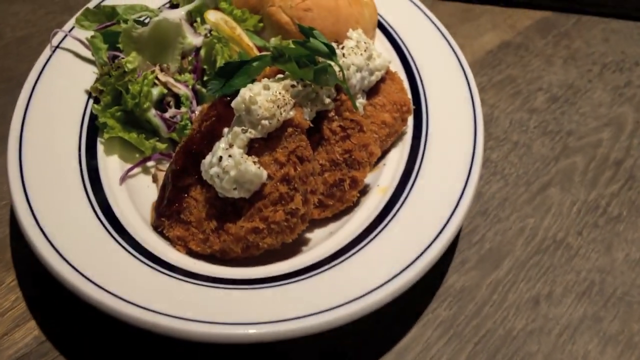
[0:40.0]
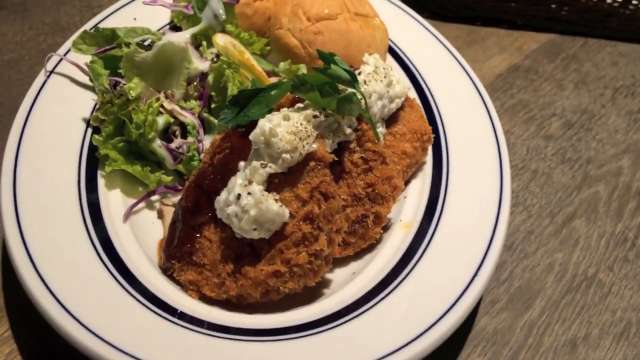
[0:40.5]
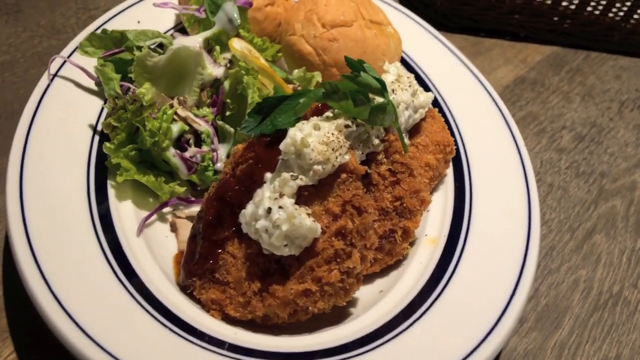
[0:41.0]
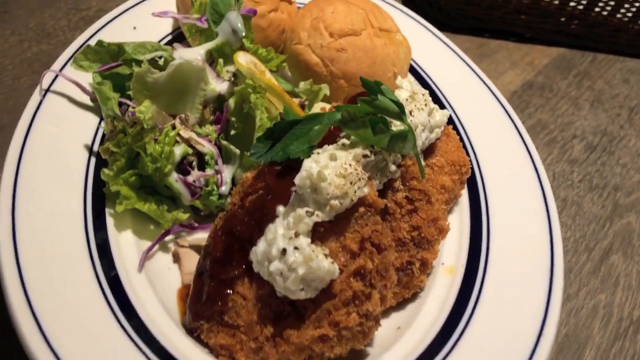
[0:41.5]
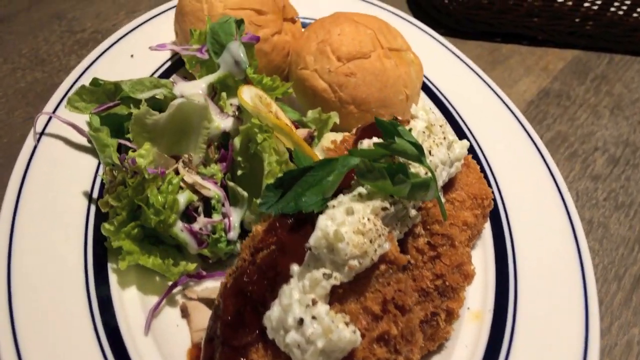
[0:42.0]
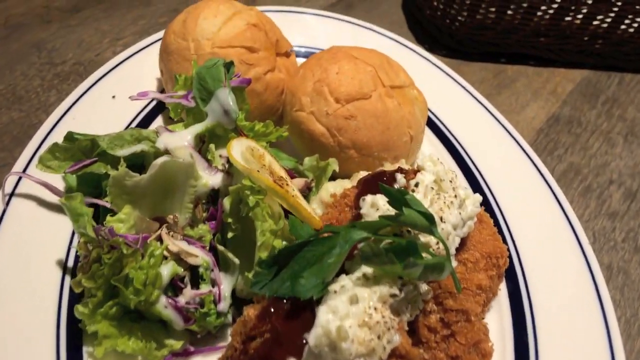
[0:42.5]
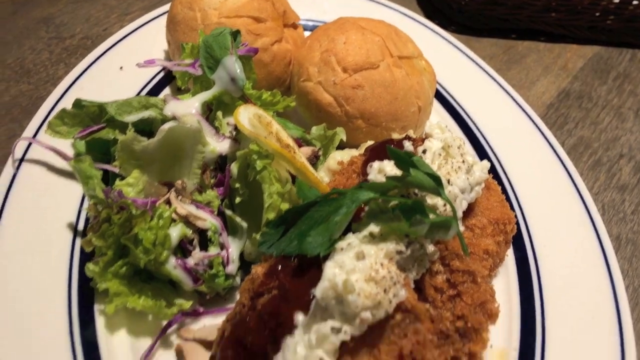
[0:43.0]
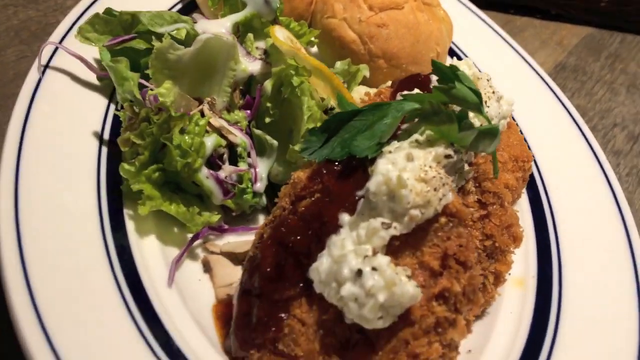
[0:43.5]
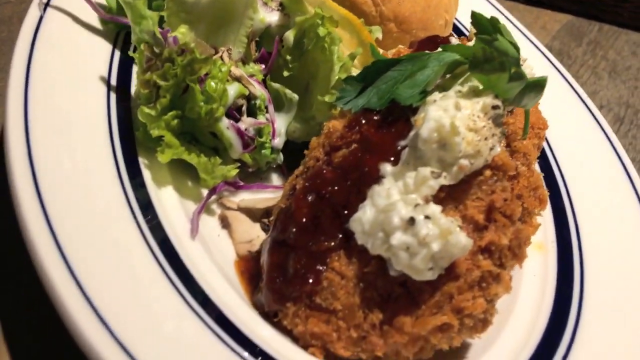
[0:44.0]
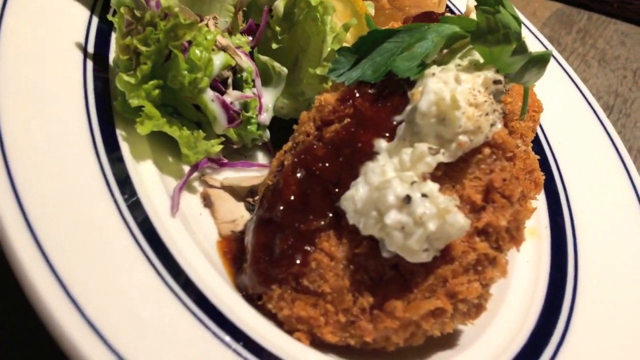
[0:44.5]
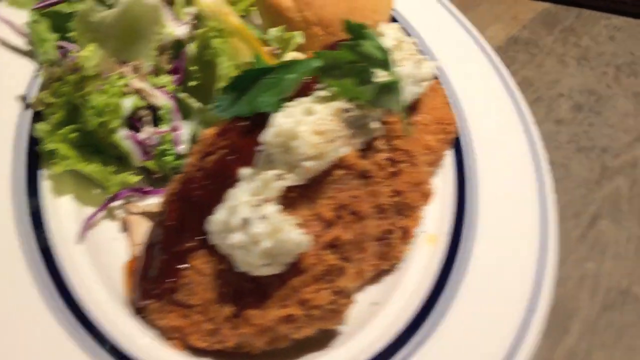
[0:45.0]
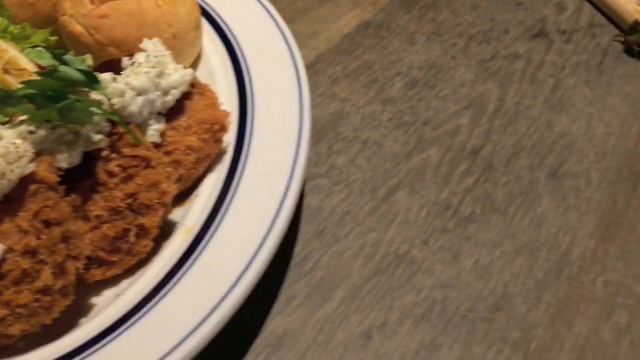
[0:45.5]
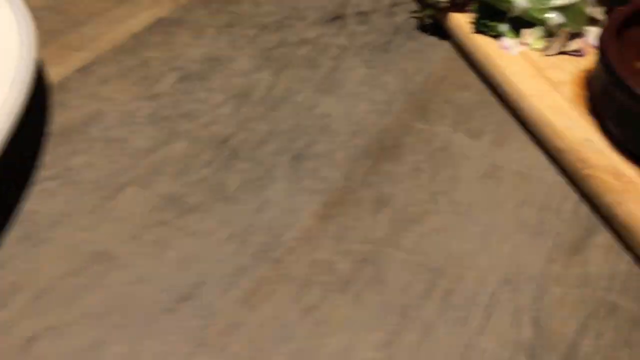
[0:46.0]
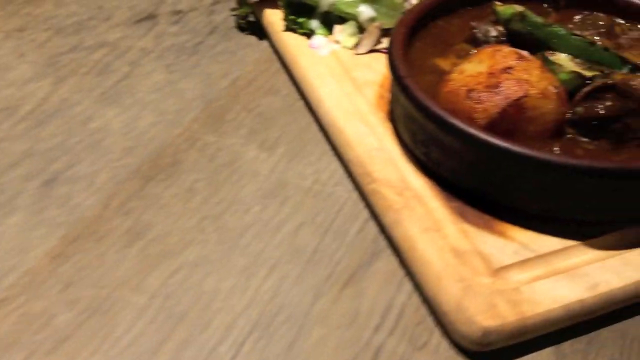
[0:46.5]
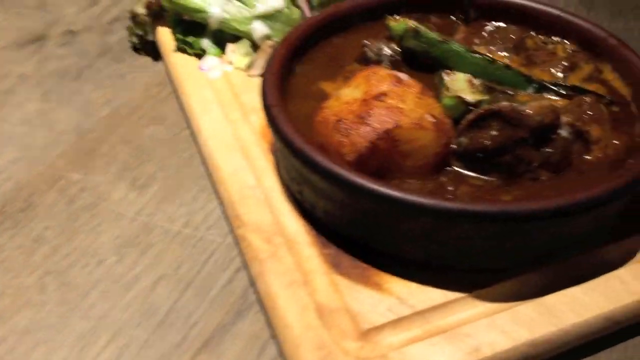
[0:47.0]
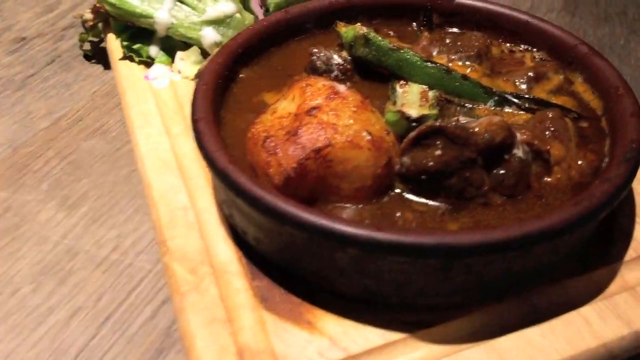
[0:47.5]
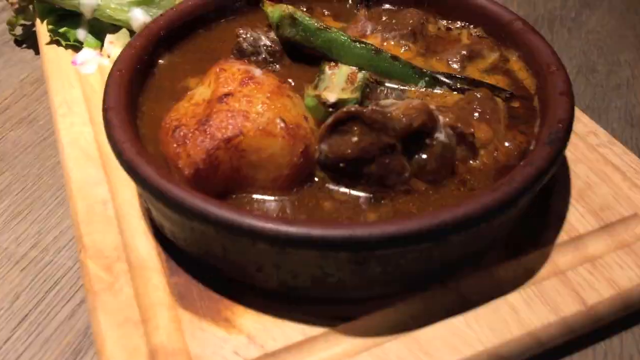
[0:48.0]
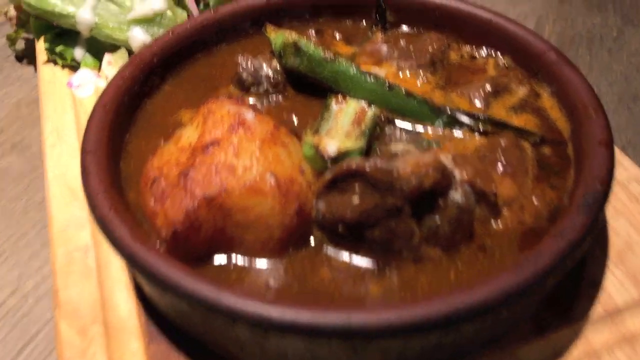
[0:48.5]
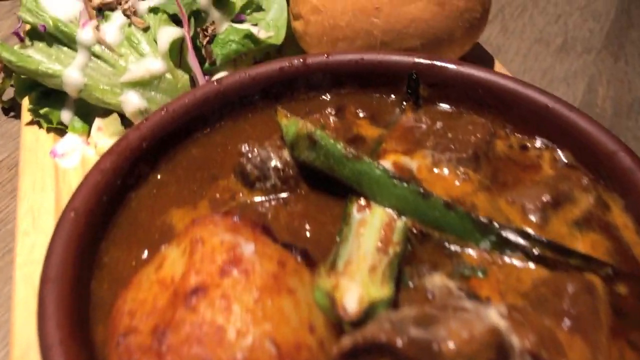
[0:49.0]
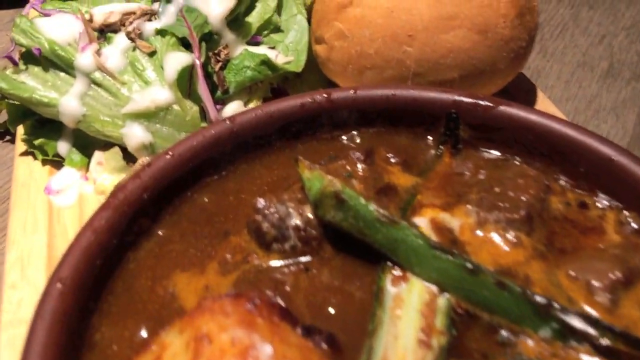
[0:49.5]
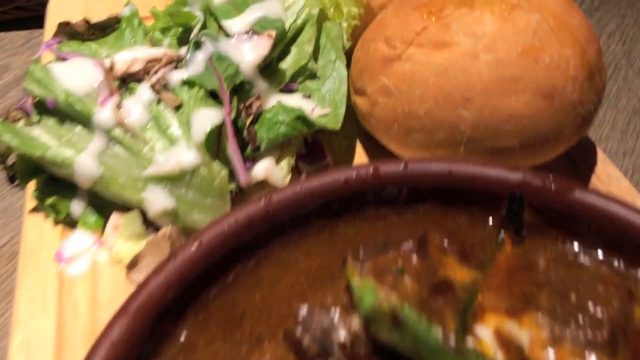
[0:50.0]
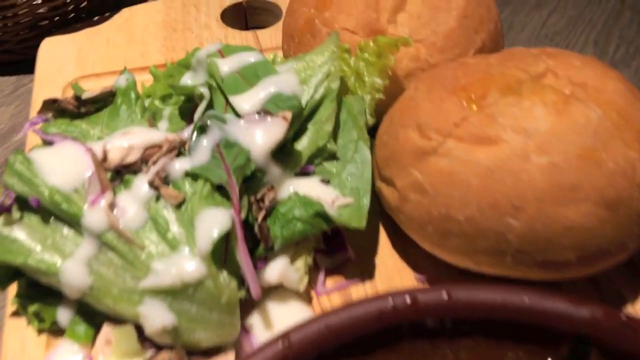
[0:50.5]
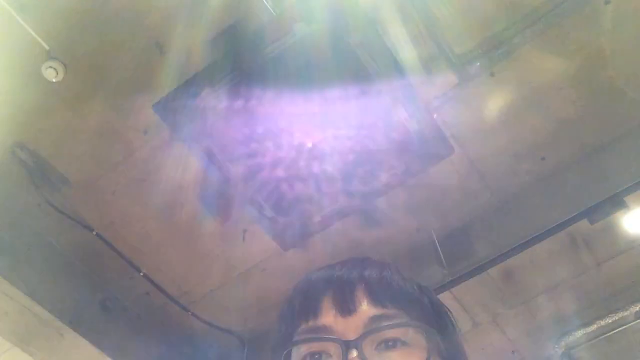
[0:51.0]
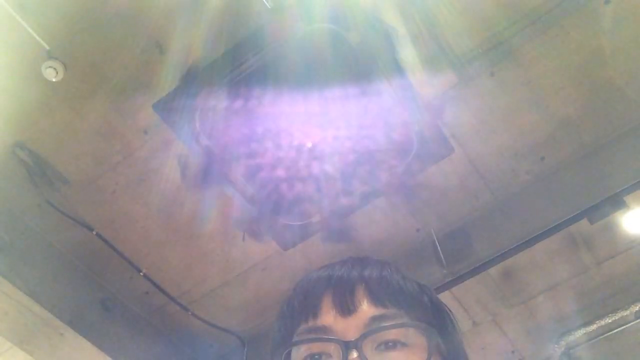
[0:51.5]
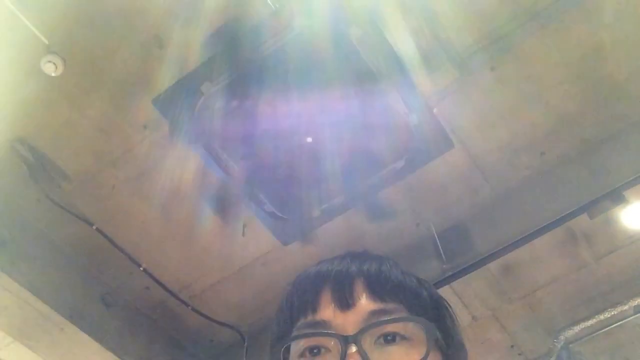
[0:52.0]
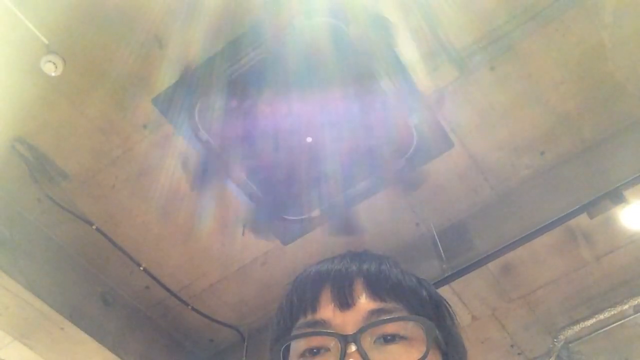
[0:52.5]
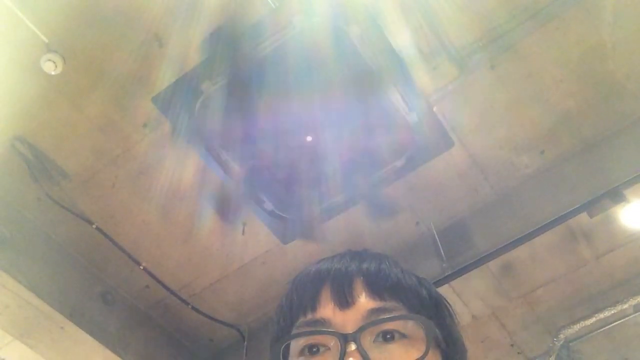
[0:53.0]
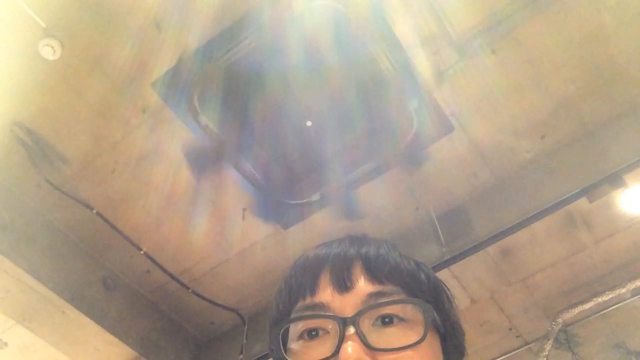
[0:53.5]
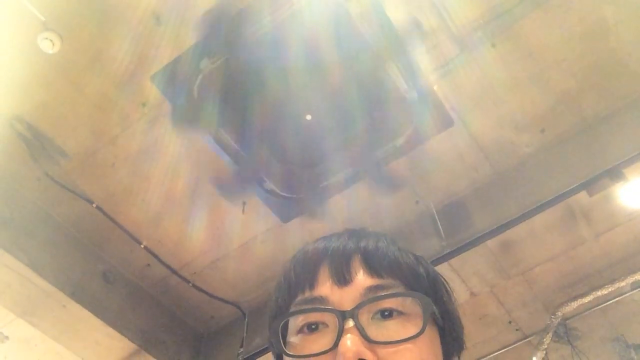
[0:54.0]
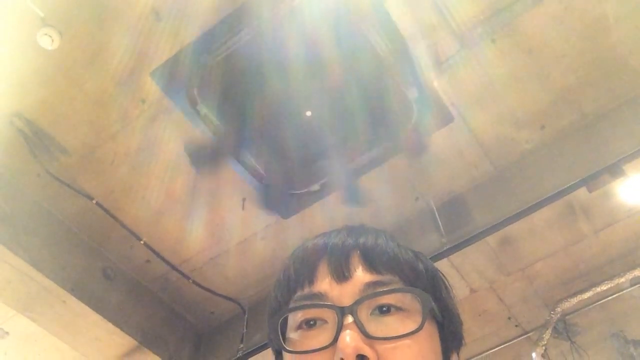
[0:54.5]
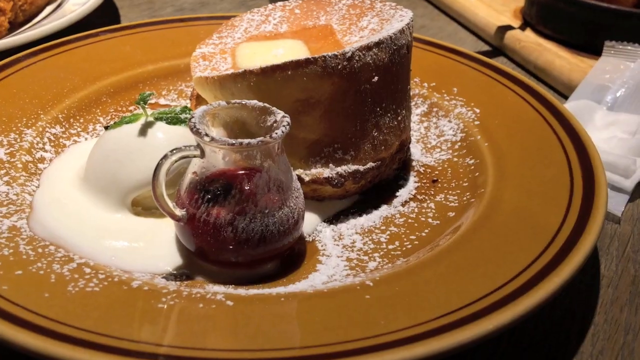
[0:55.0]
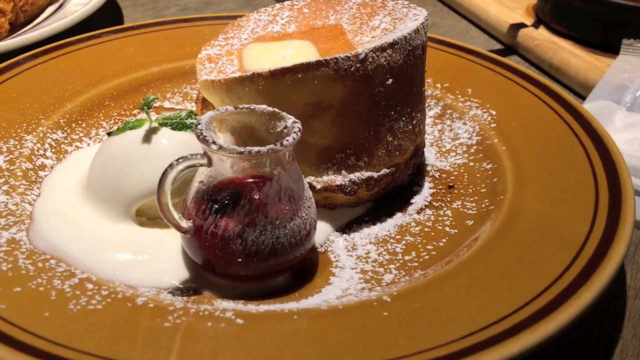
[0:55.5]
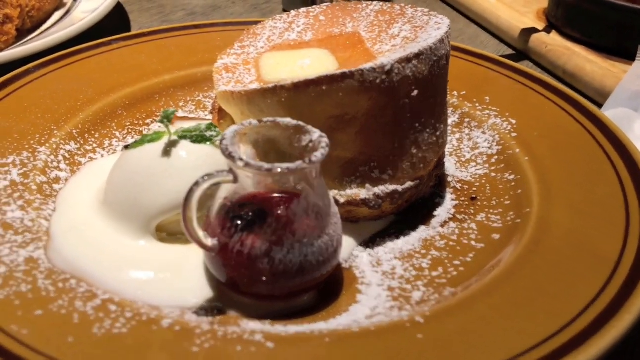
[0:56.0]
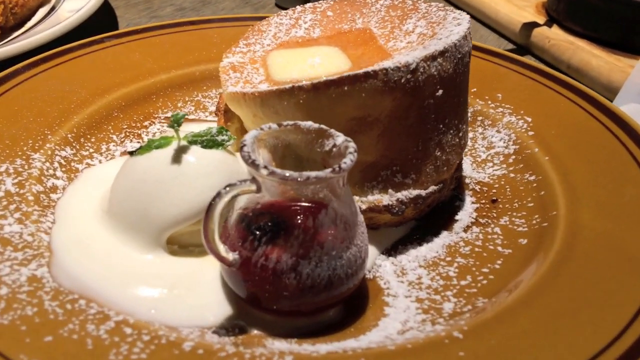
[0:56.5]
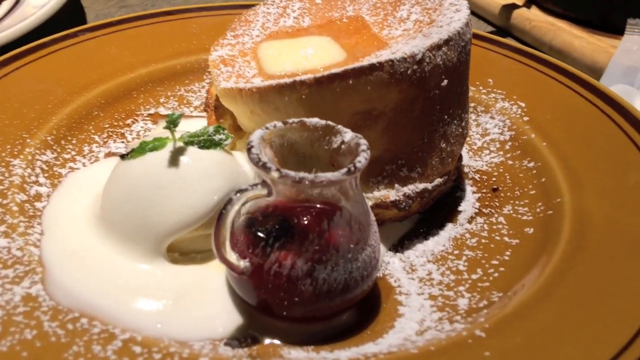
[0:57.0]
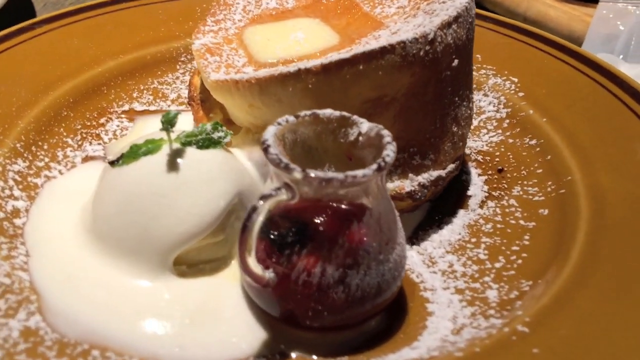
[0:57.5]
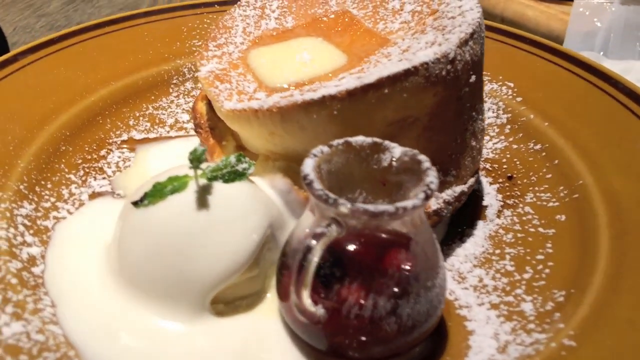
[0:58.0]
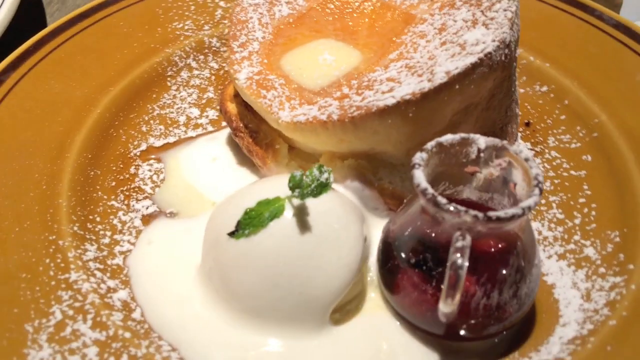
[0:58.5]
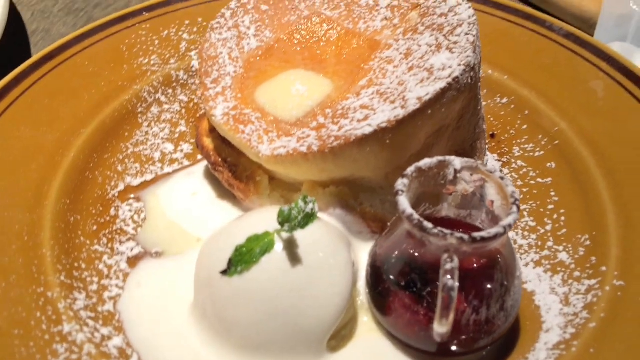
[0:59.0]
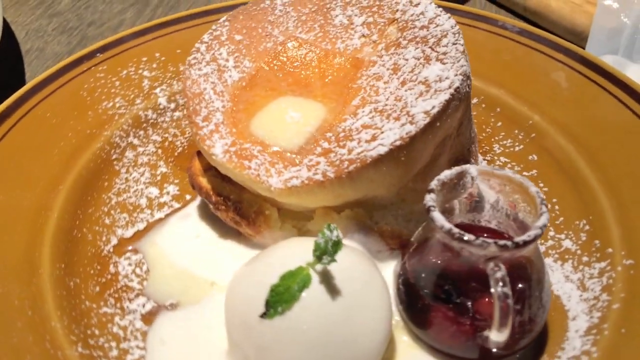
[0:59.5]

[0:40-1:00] The first dish the man ordered looks like a breaded meat of some kind, with a white chunky coleslaw dripped on top. The plate also holds a mixed green salad and two buns that look like hamburger buns, and it is a white plate with blue rings around it. The video pans to the next dish, which looks like a hearty beef stew with a thick, rich brown sauce covering most of it. It has some cooked celery or green vegetable on top, and some kind of puff pastry is also served inside the bowl. The bowl is sitting on a wood plank and is served with a salad and buns that look like hamburger buns. A selfie view then shows the man who ordered the food; he has short black hair with bangs and wears black glasses. The view is angled up at his face, showing the ceiling, where a large black fan is turning, and there appear to be mirrors on the sides of the restaurant. The video then pans to a dessert: another large puff pastry served on a yellow plate, with powdered sugar all over the top and a pat of butter that looks like it is melting on top. It is served with vanilla ice cream with a mint insert and some type of jam or jelly.